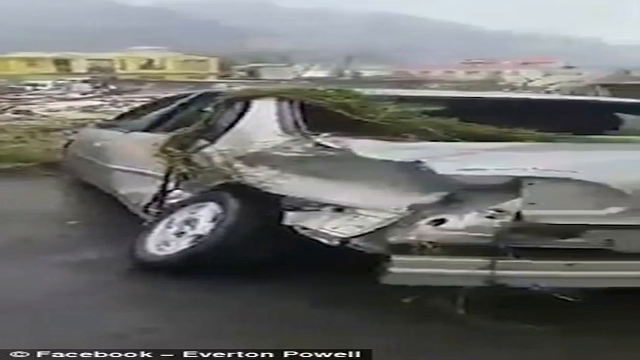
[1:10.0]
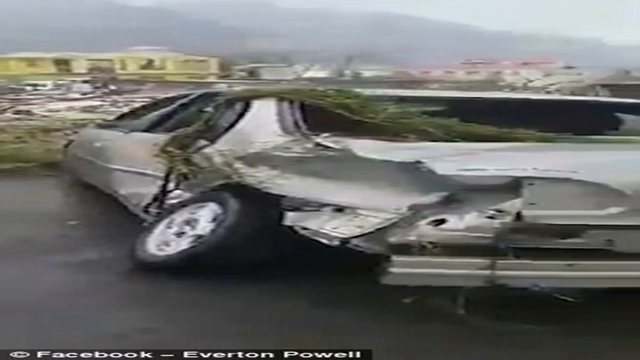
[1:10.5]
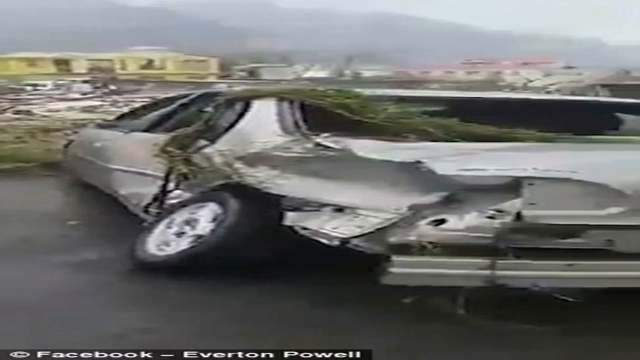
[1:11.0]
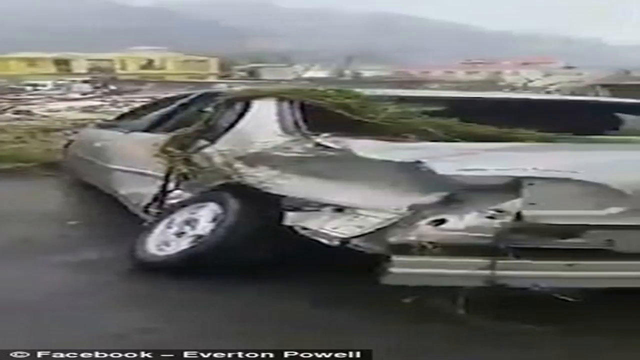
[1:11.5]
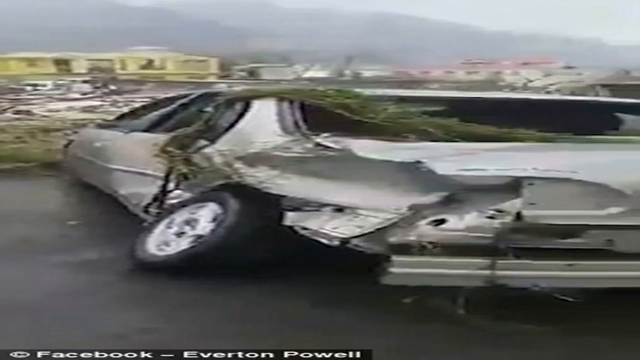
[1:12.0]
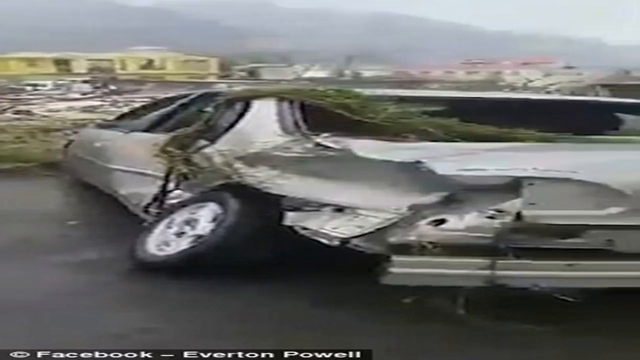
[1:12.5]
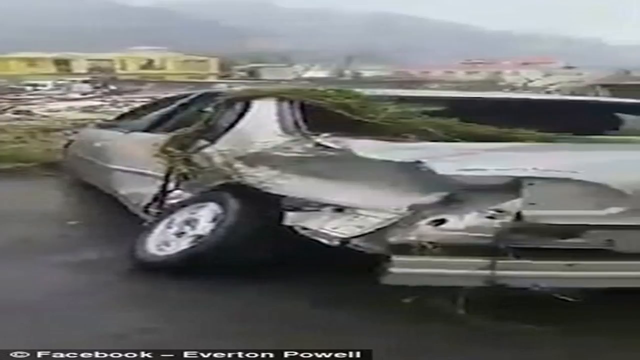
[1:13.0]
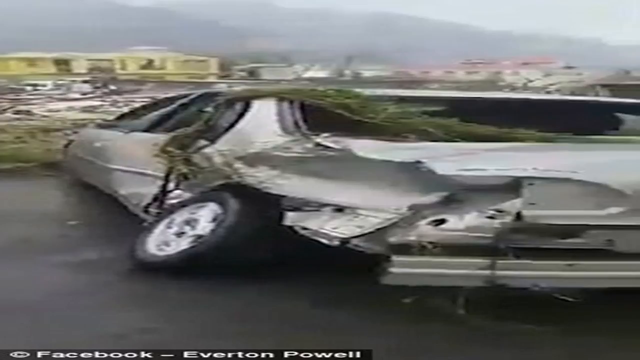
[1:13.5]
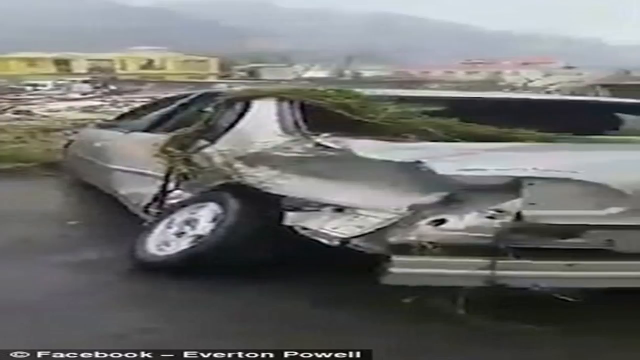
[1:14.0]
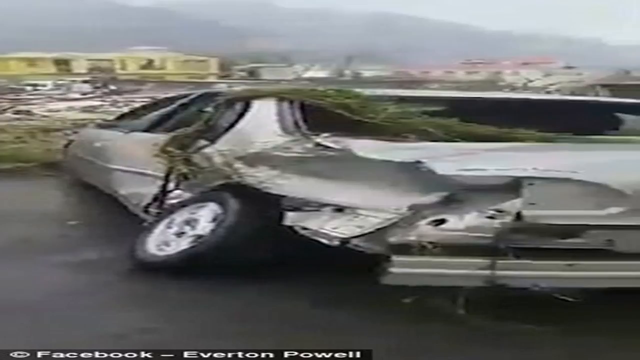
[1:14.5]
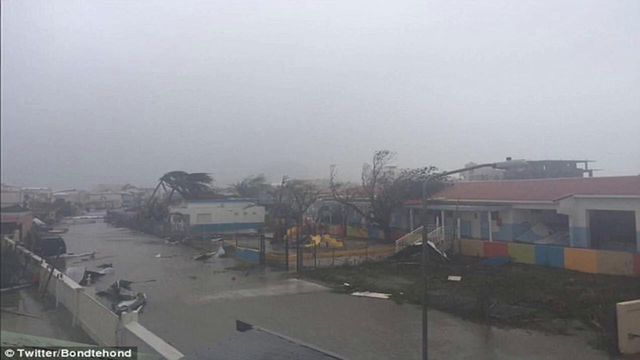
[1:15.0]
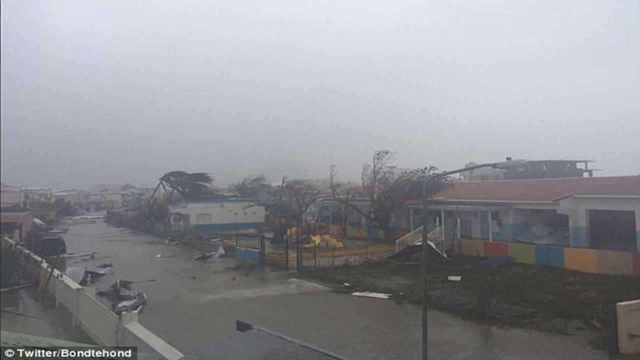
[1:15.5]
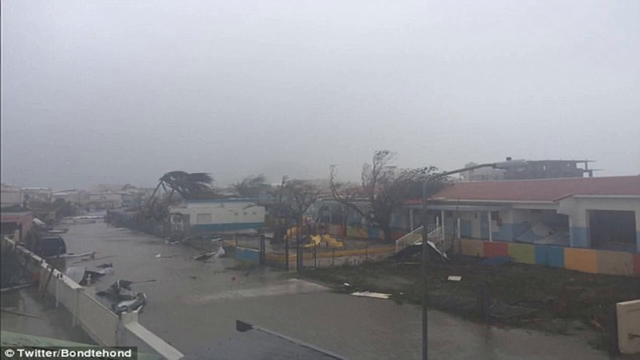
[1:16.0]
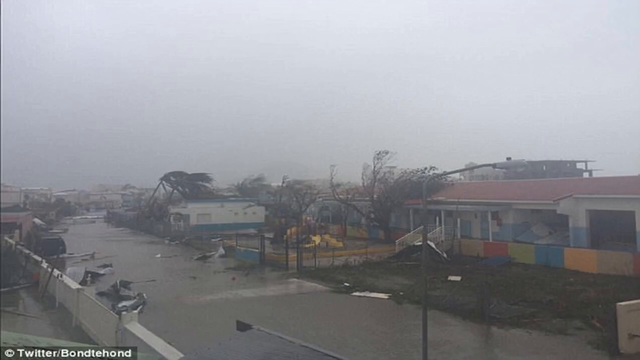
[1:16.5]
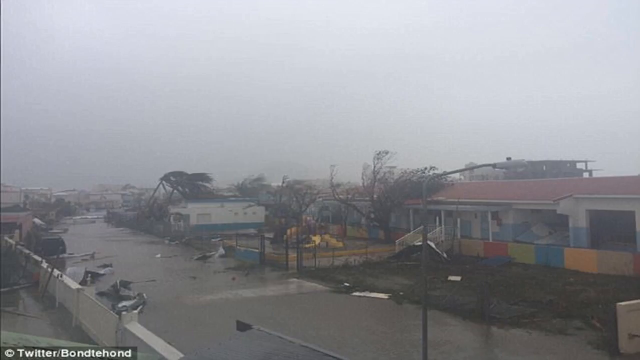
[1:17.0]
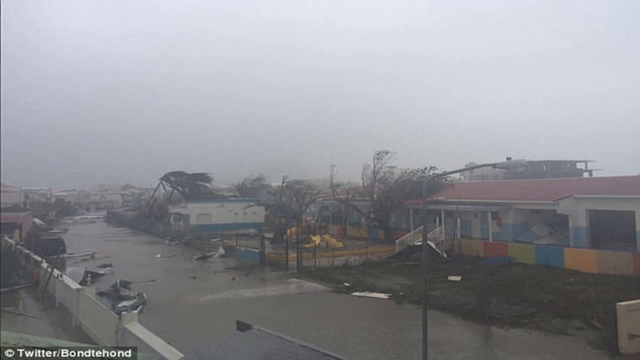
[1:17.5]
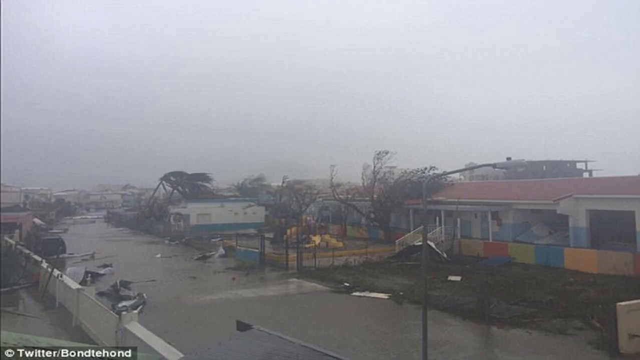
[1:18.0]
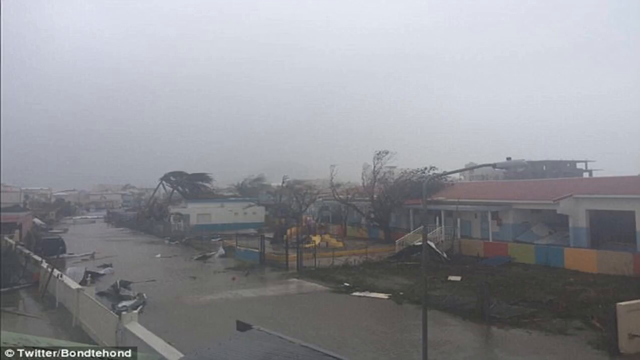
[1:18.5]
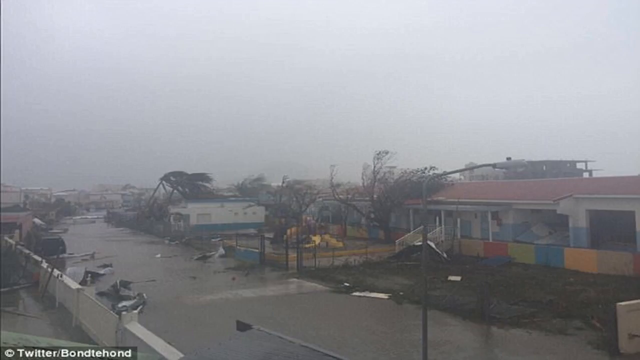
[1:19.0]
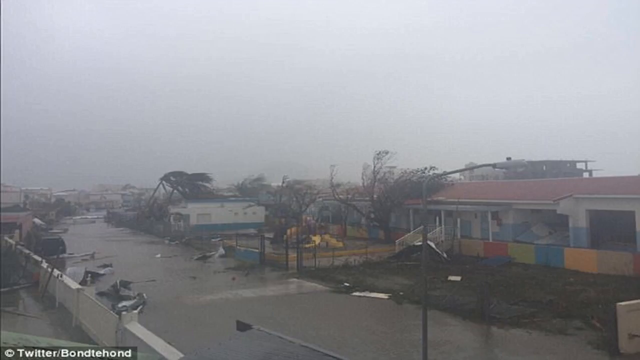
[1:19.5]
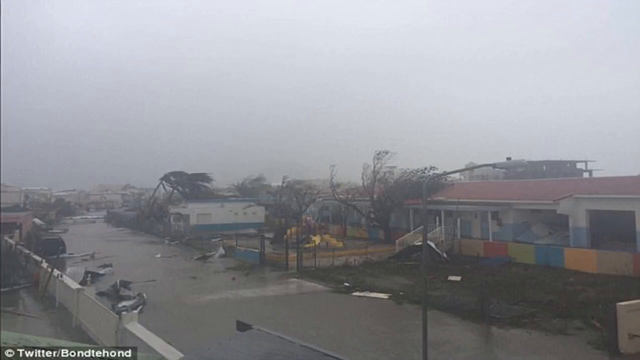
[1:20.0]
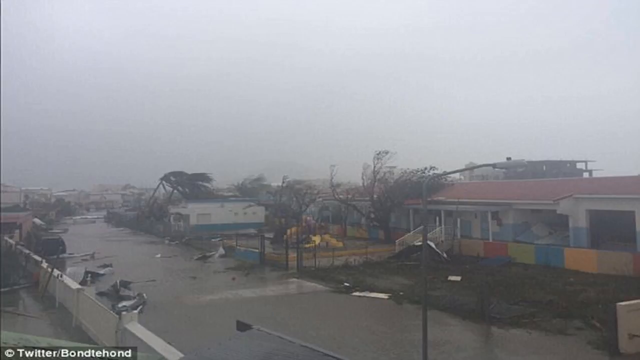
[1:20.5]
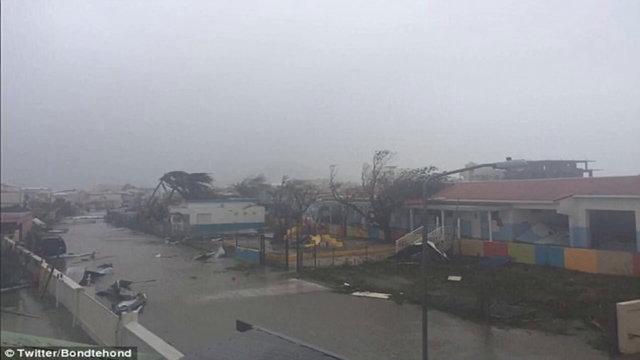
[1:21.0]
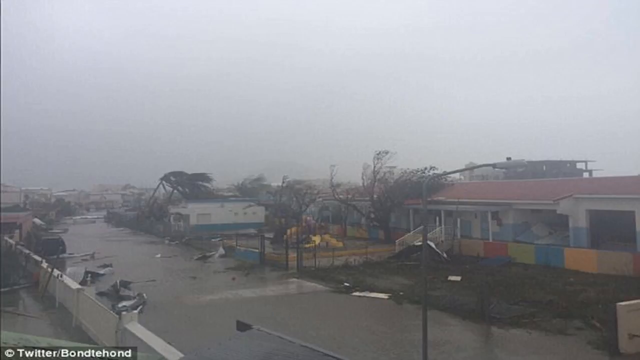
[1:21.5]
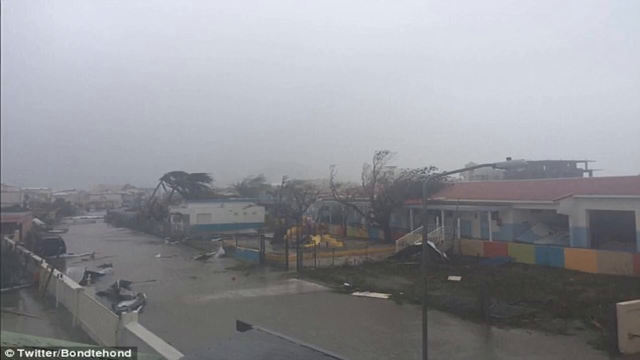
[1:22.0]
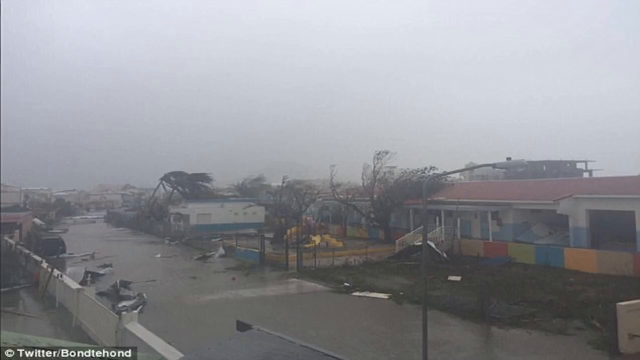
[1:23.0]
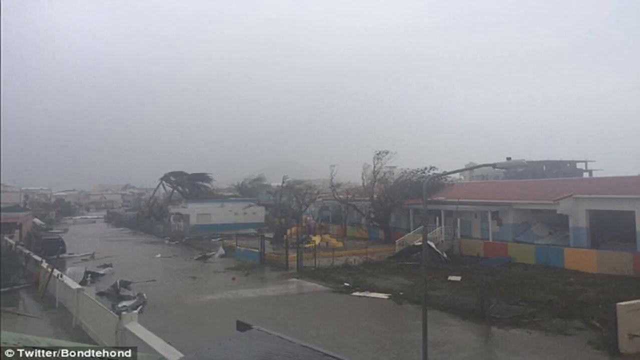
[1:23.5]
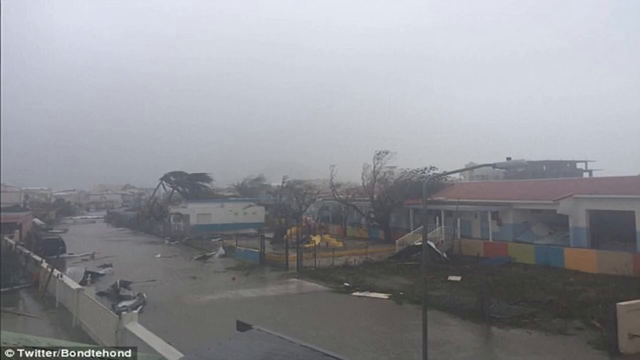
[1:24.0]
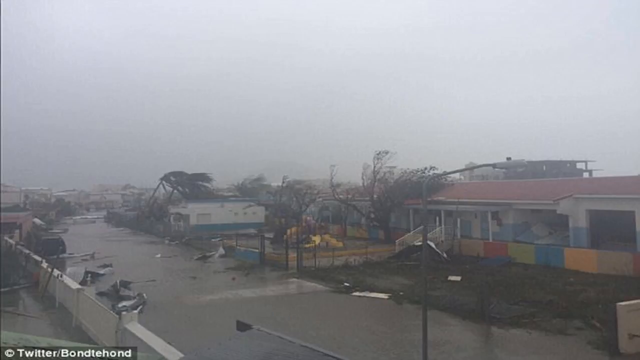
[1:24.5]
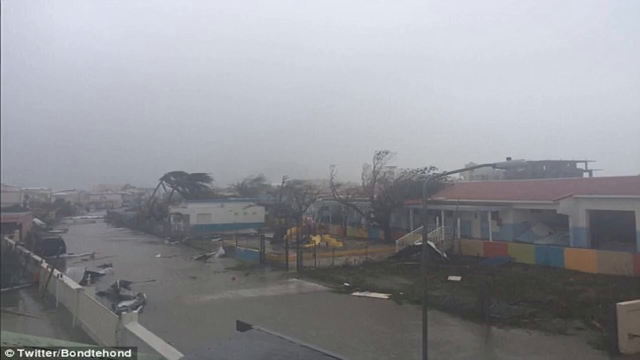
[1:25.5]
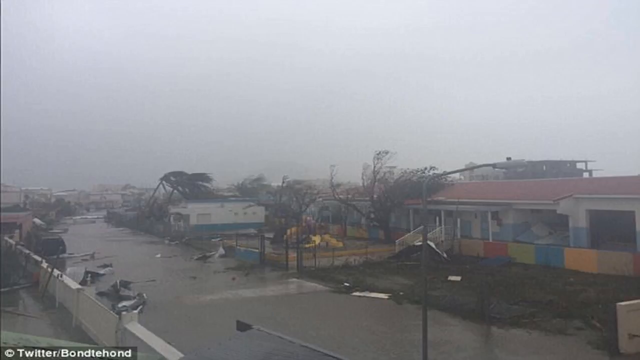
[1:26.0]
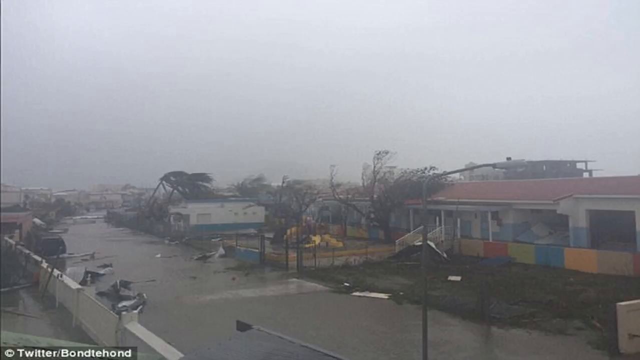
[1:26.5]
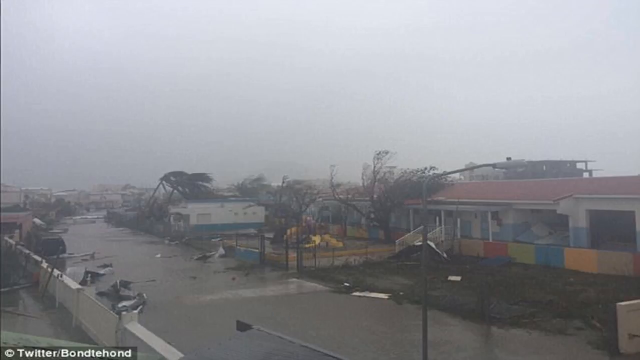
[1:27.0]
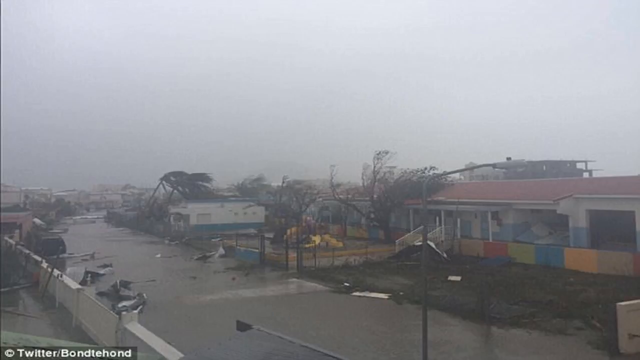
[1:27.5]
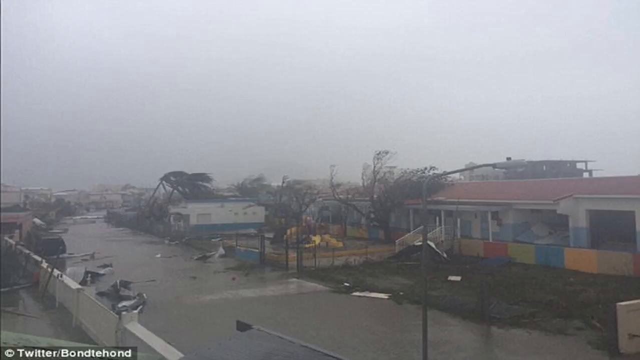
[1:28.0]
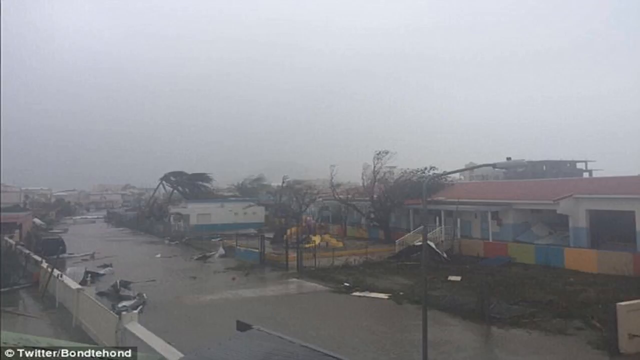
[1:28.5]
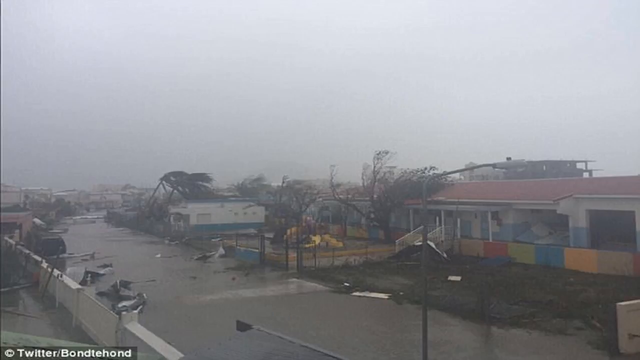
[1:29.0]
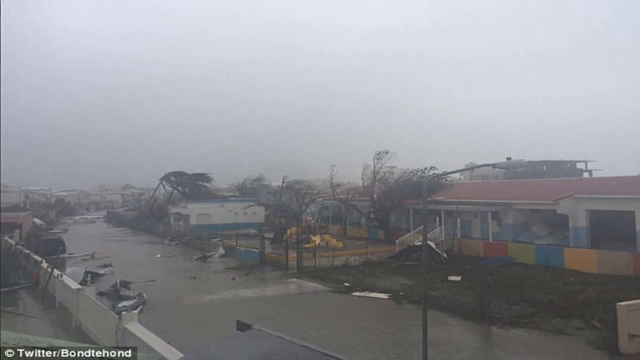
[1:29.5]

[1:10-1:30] The low-quality, blurry still image credited at the bottom to Facebook and Everton Powell continues, showing what looks to be a completely damaged four-door white sedan with some green leaves on top of it, apparently damaged by some type of hurricane or related weather disaster. The video then transitions to another still photo, marked at the bottom left as from Twitter, showing what looks to be a hurricane in progress affecting a town. Trees are falling and leaning over, and some trees lie on top of buildings. The water level has risen along the roads, which are completely flooded, and the weather is overcast with gray skies.